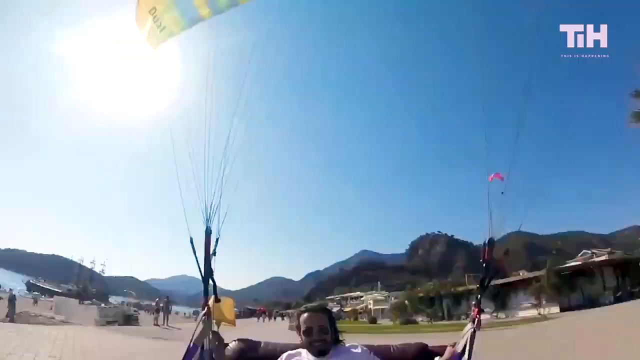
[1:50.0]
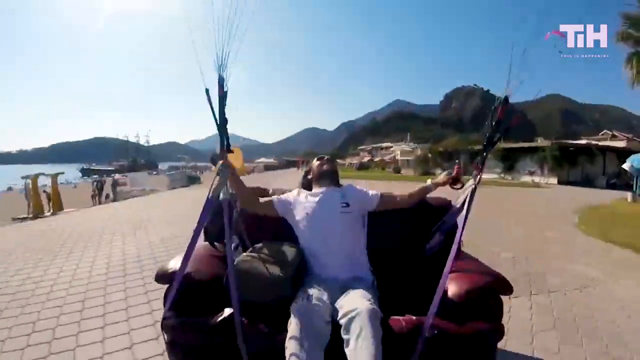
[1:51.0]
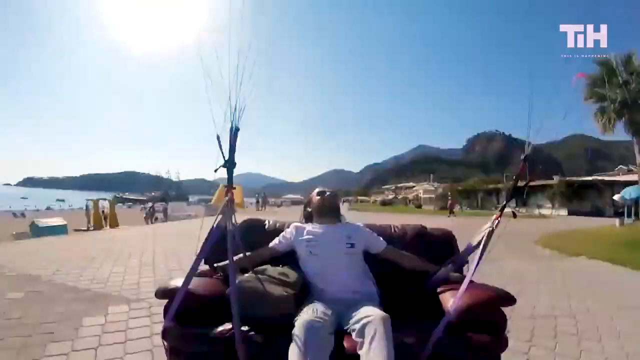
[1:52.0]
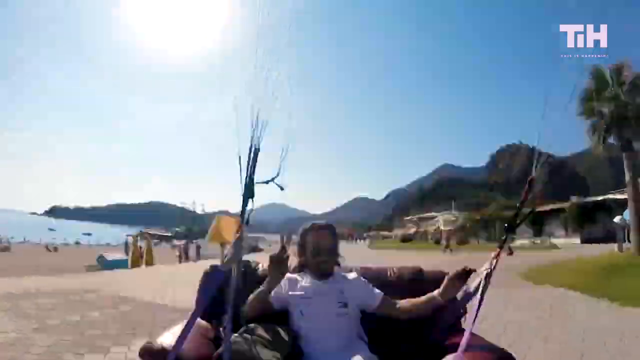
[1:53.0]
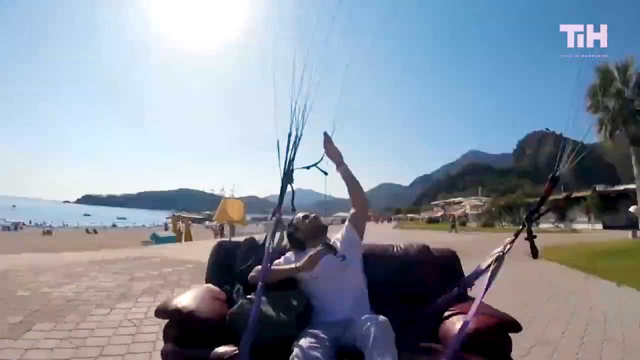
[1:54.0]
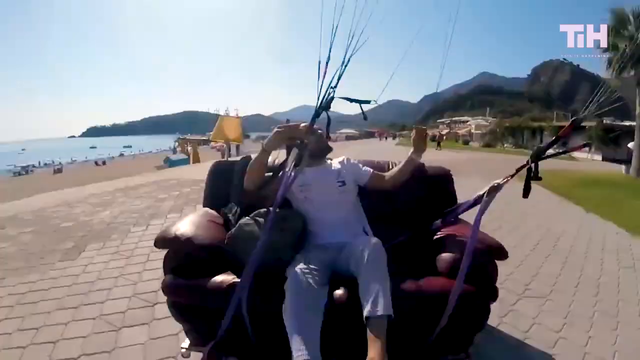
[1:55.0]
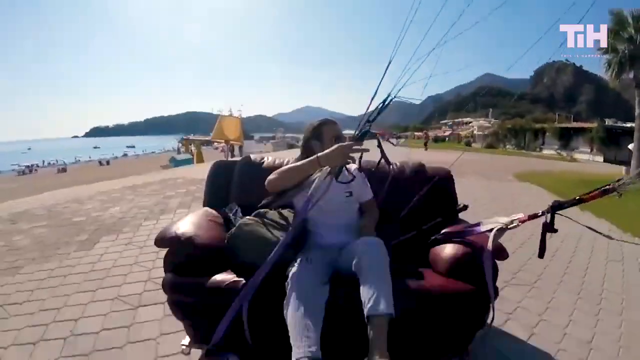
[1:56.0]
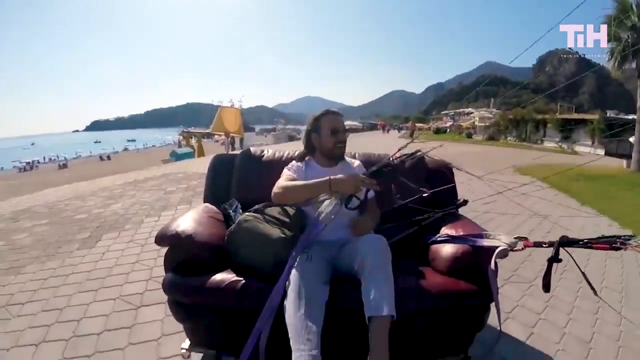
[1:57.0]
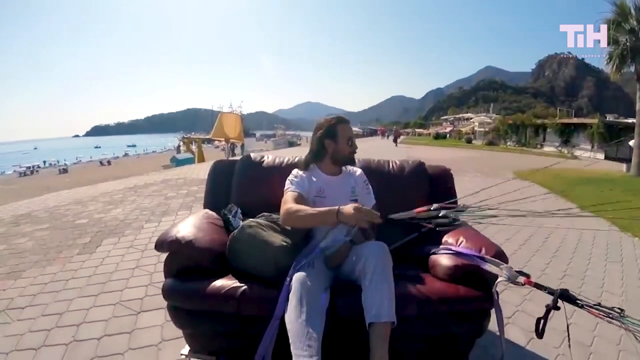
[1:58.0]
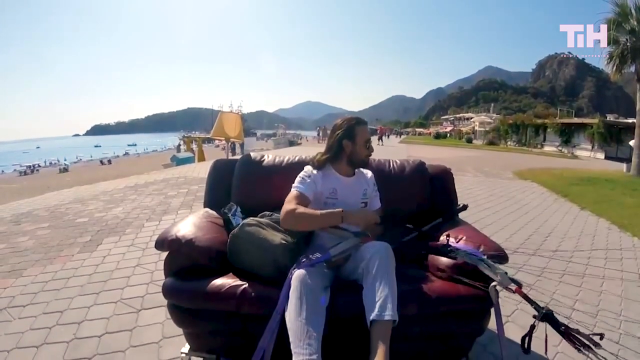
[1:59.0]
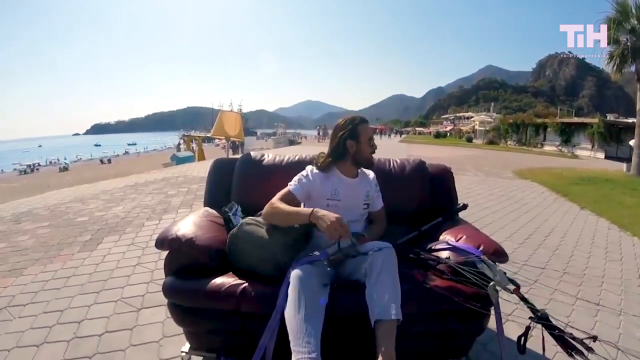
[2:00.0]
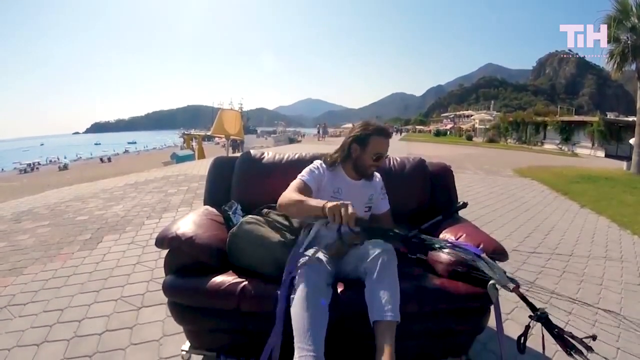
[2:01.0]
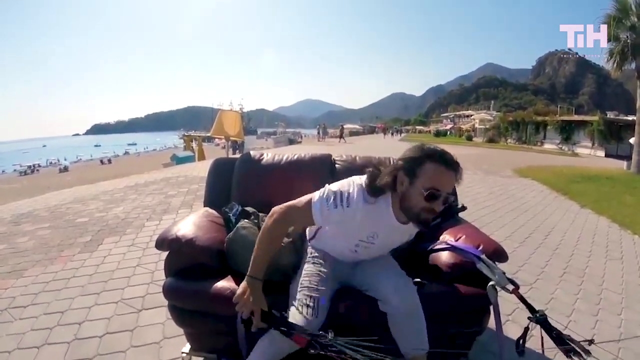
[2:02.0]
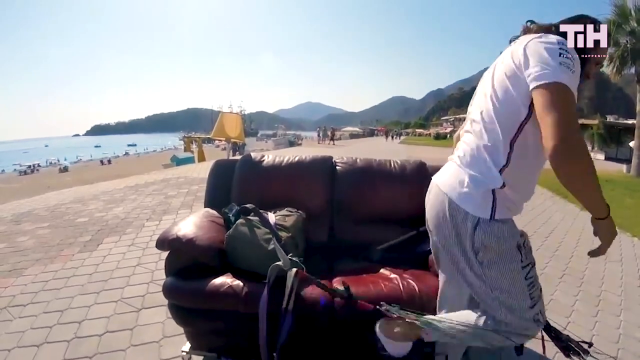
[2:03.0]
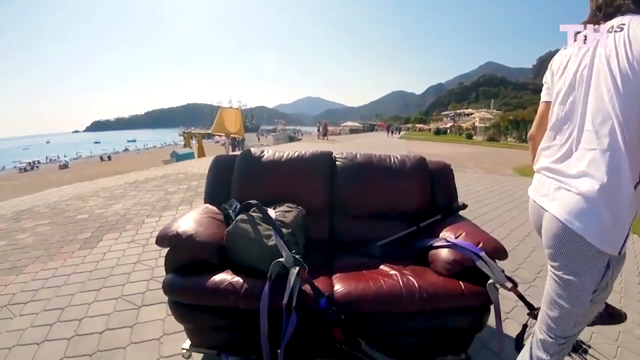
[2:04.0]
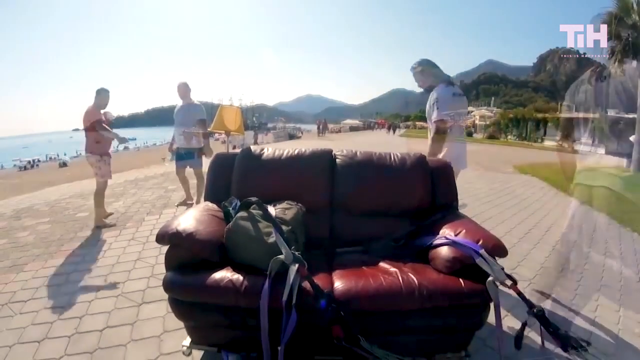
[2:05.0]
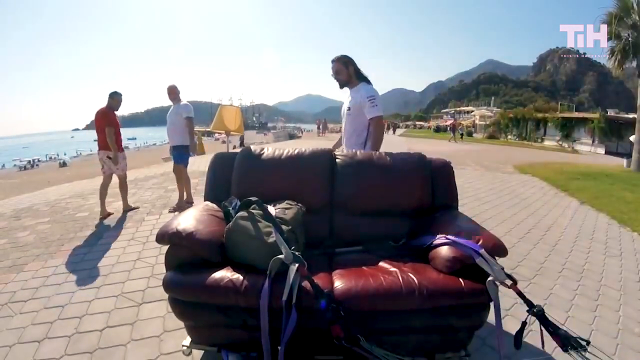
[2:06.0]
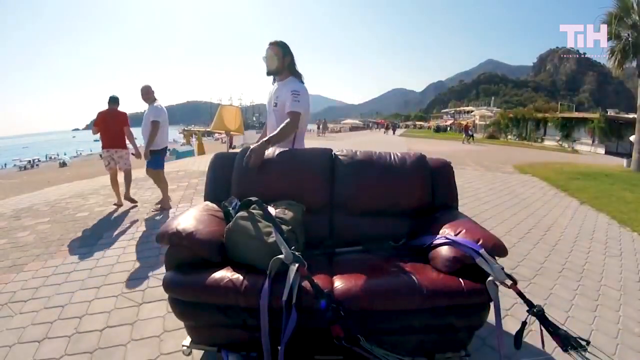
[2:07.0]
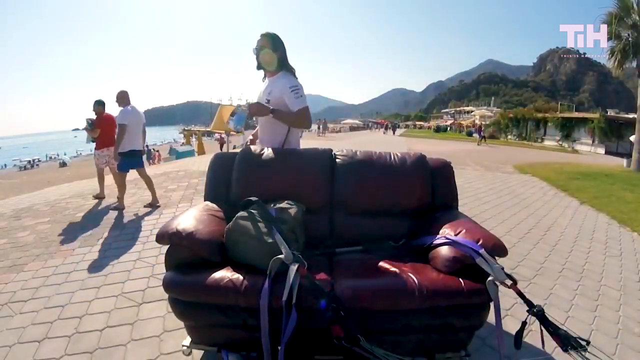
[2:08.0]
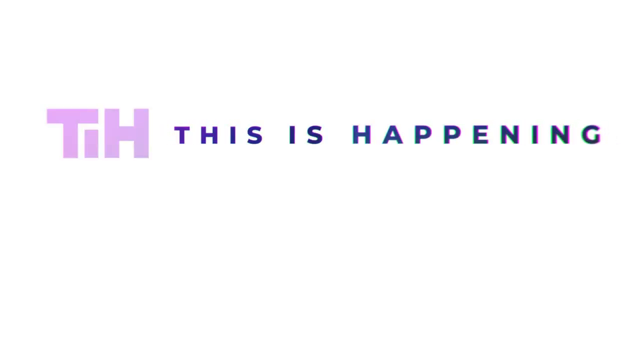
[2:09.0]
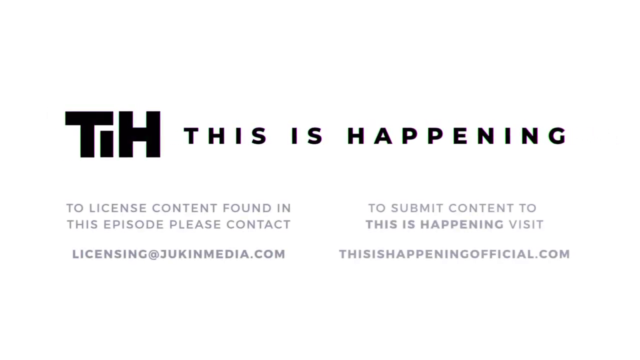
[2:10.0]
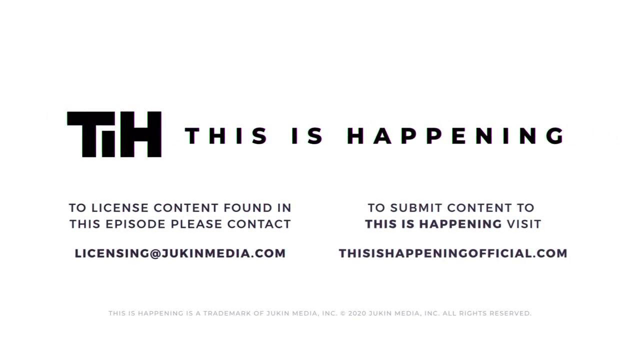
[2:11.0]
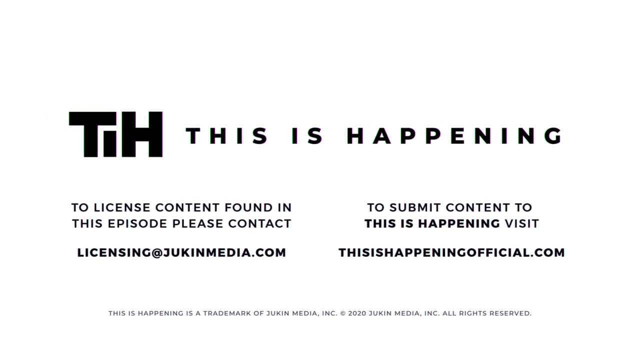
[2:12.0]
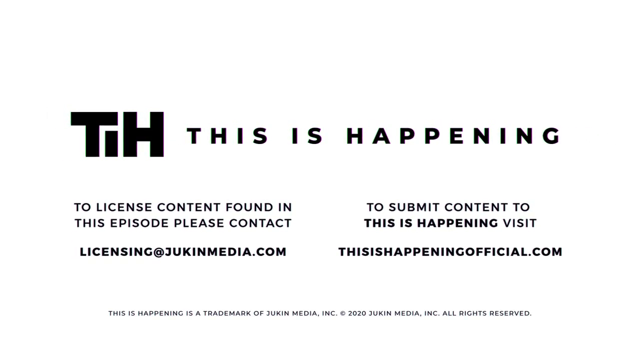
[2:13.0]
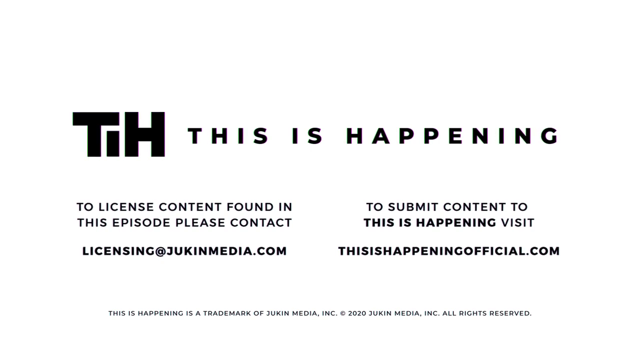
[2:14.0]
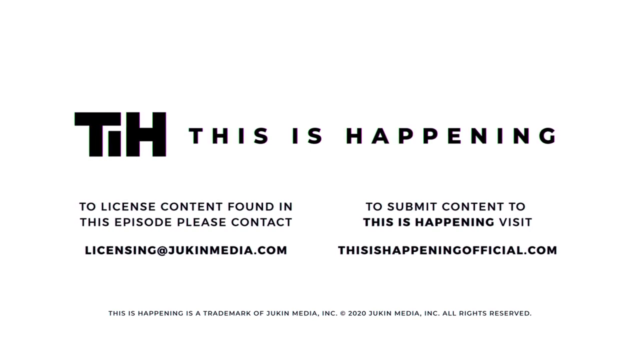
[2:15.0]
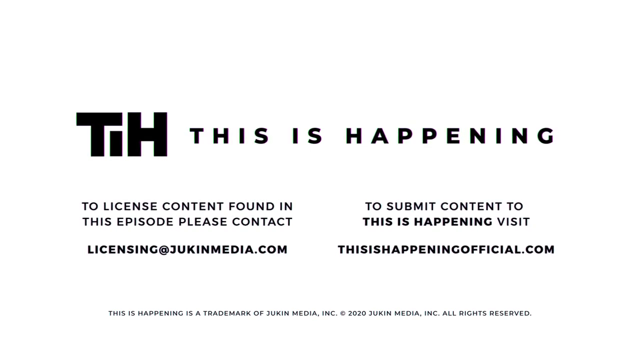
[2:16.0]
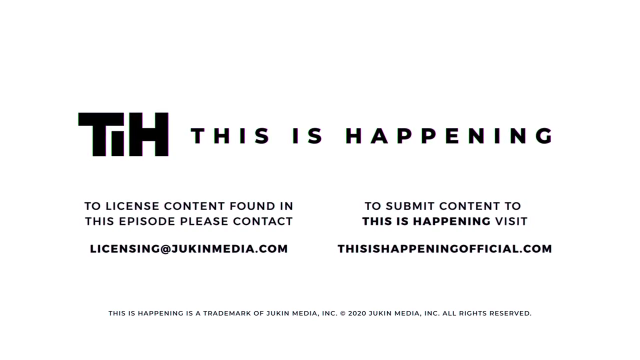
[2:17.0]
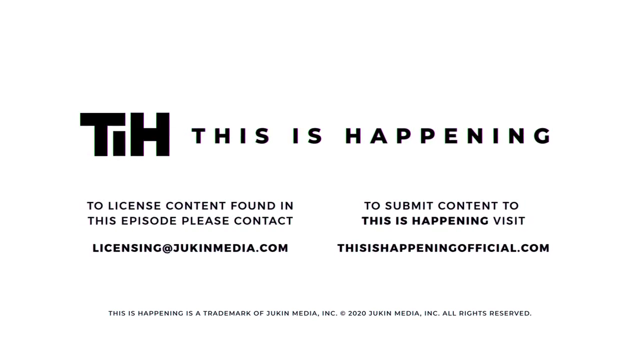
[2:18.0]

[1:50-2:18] The couch flyer lands the couch, and the camera equipment seems to tremble quite a bit during the landing. He was not wearing any harness or seat belt to keep him on the couch. He rests the parasailing bungee cords on the ground, gets up and steps off the couch, grabs his snack from the couch, and walks over to the three men who helped him take flight. After the landing, many houses very close to the coastline are visible in the background, along with a large sidewalk where spectators move back and forth, and several homes situated close to each other not far from the coastline. The end of the video gives information about the logo from the top right corner, "TIH", "This Is Happening". The screen says "to license content found in this episode, please contact licensing at jukinmedia.com" and "to submit content to This Is Happening, visit thisishappeningofficial.com". It also states "This is happening is a trademark of Jukin Media Incorporated. 2020 Jukin Media Incorporated, all rights reserved."